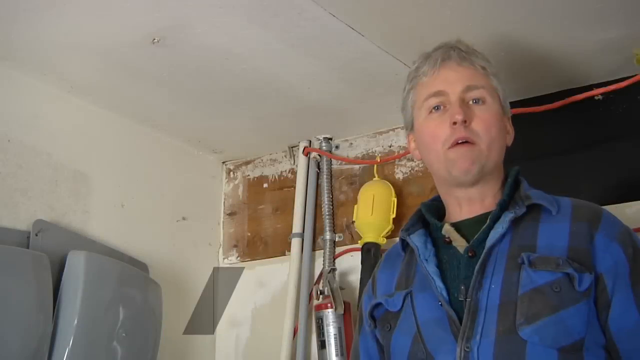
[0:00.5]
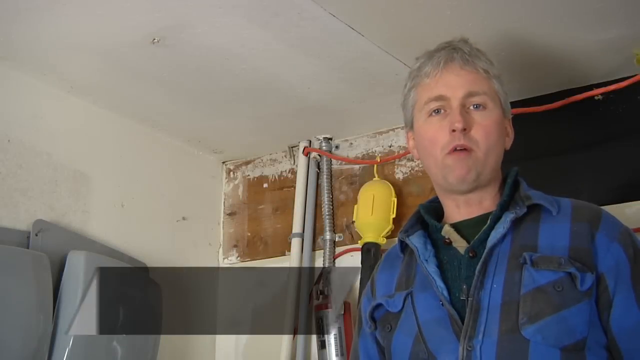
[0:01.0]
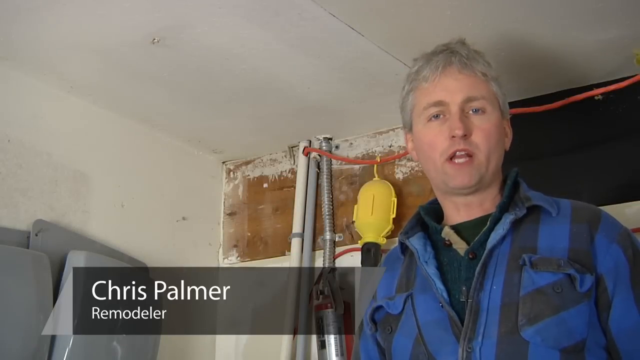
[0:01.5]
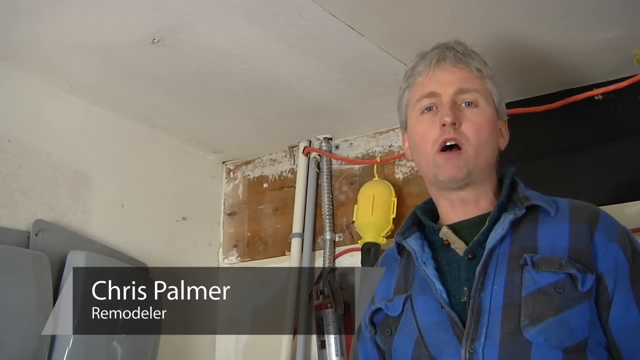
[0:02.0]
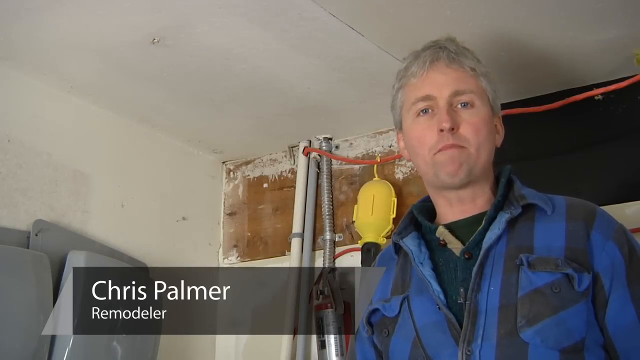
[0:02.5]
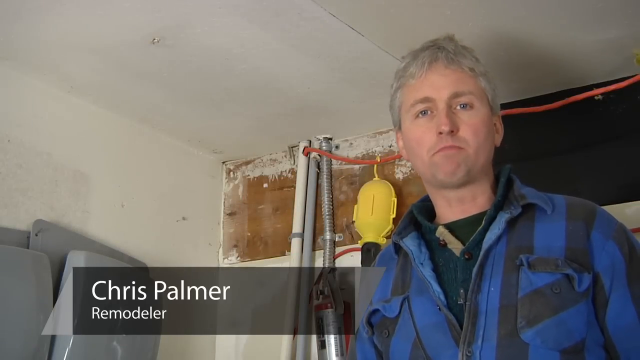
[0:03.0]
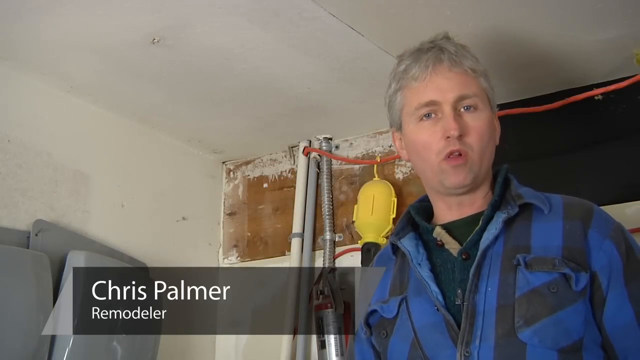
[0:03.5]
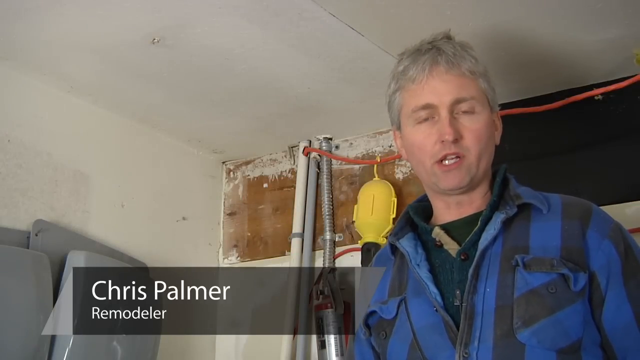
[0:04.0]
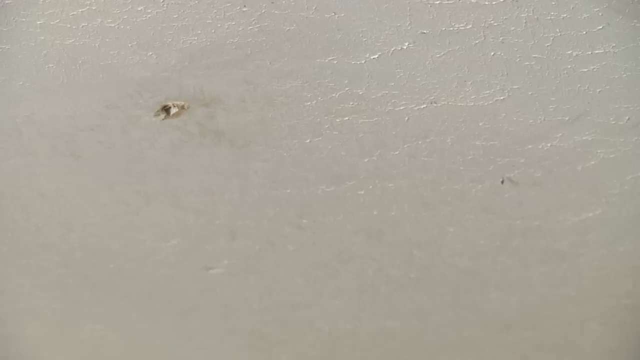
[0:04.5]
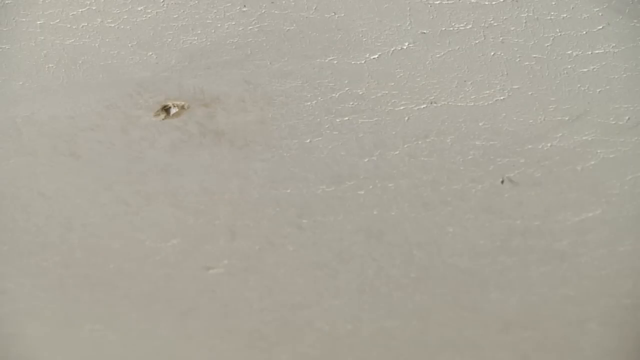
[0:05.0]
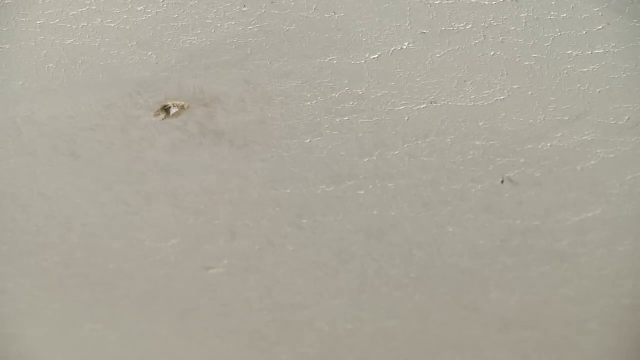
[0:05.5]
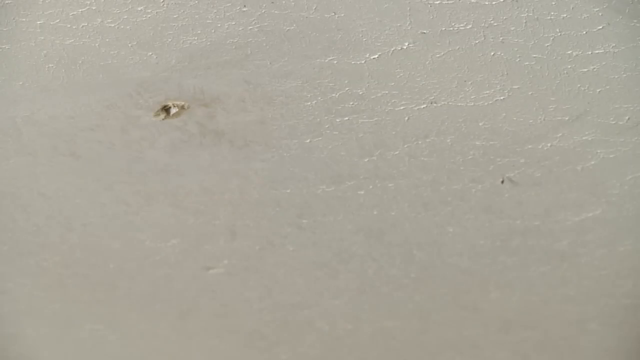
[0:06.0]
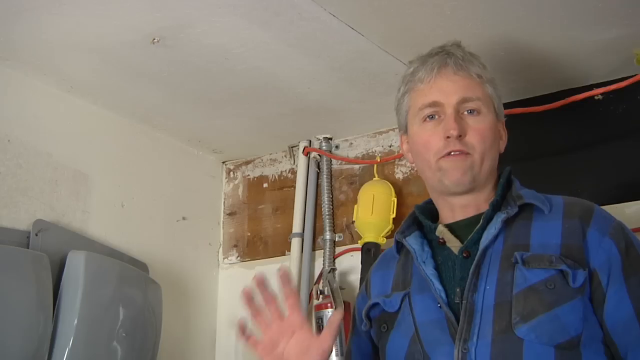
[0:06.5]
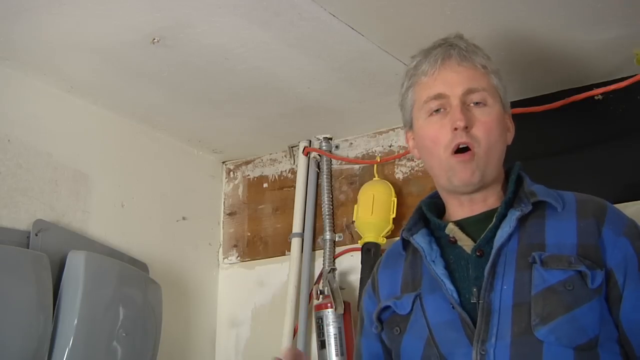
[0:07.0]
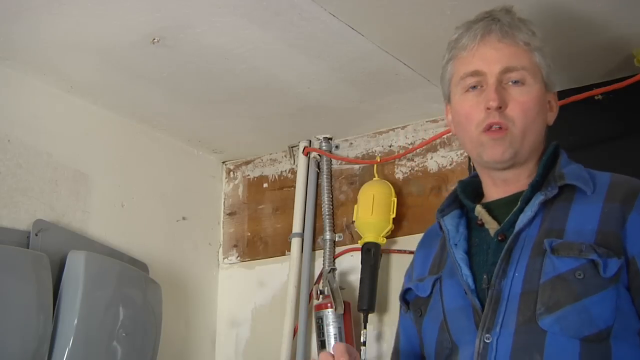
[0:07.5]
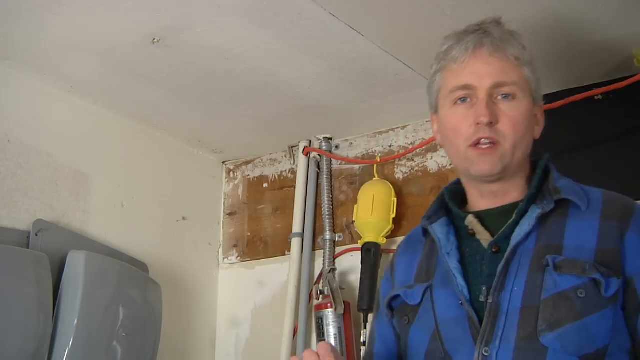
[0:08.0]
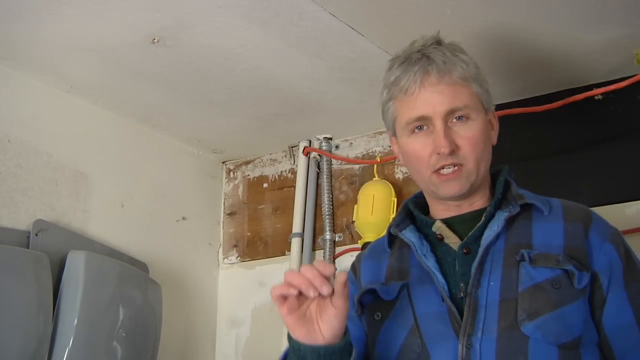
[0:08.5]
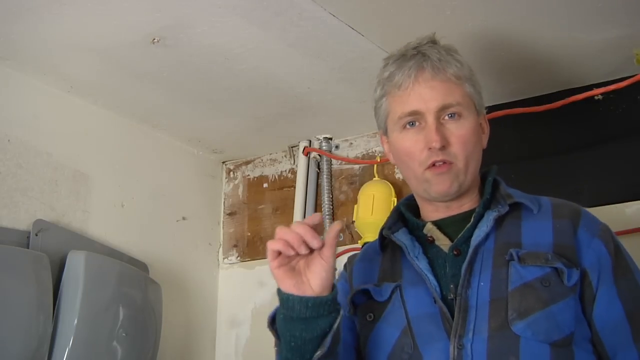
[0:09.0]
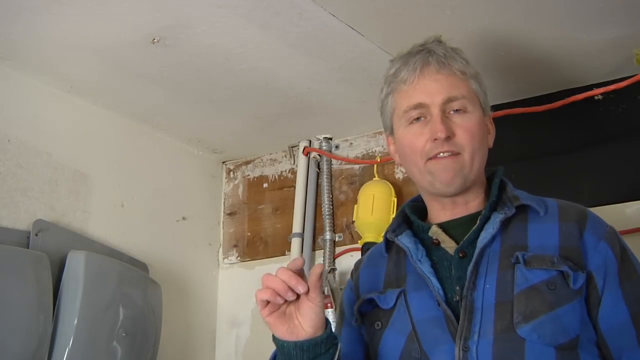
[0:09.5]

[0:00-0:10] A white man who looks to be in his early 40s or maybe late 30s, with gray hair and a clean-shaven face, wears a blue and navy blue striped or slightly plaid flannel shirt or flannel jacket over a dark aqua navy blue button-down or zip-down windbreaker, over a black undershirt. He is standing high next to a ceiling of what appears to be newly placed drywall or sheetrock, in the corner of a tight area where the ceiling and two walls merge. The drywall is on the ceiling, where two joined panels are visible, and a side of drywall can also be seen on the wall. The wall behind him appears to be natural wood with some plaster or spackle staining. As he talks, a title wipes into the lower third of the frame toward the left: a semi-transparent gray or black box with his name in white lettering, "Chris Palmer", and his title below, "remodeler". Chris Palmer is on the right of the frame. The shot then switches to the drywall ceiling, where there looks to be the hole of a screw used to fix the drywall to the joist; apparently no sealant or spackle has been placed over the hole. The shot cuts back to Chris, who holds up his right hand by his right shoulder with his thumb and pointing finger together, making a small gesture almost like a wrench, while he continues to talk.